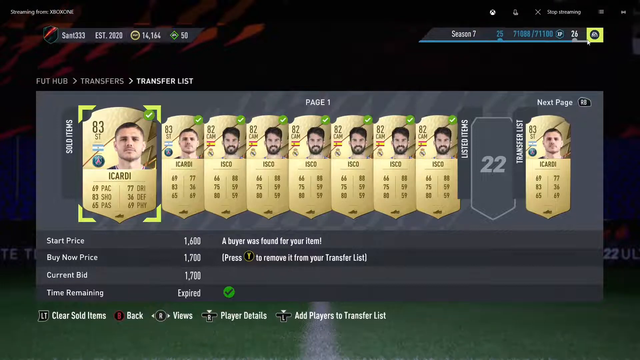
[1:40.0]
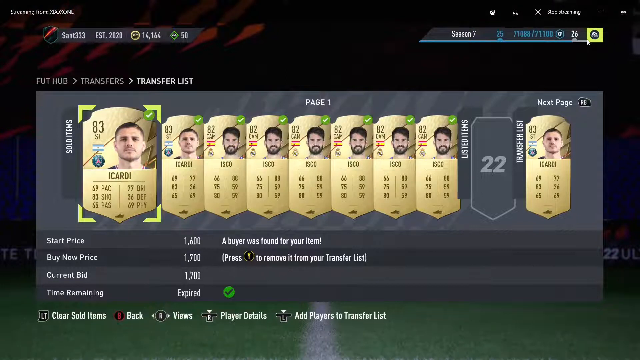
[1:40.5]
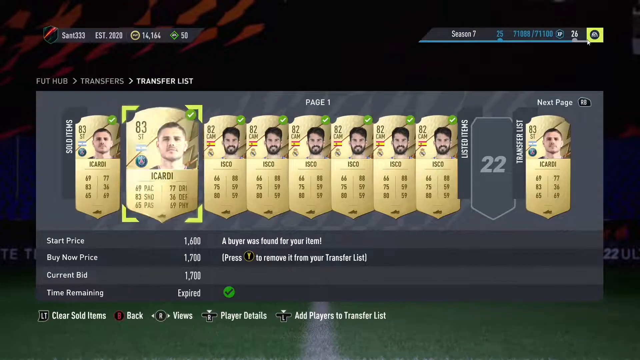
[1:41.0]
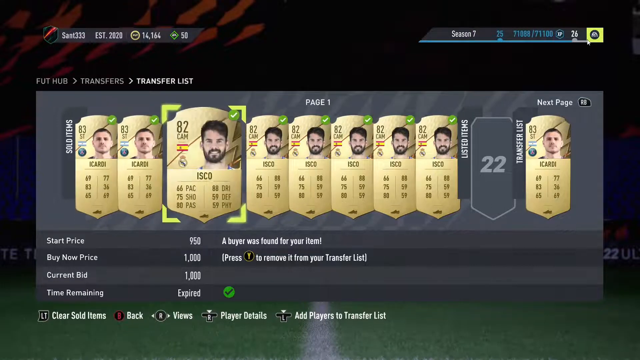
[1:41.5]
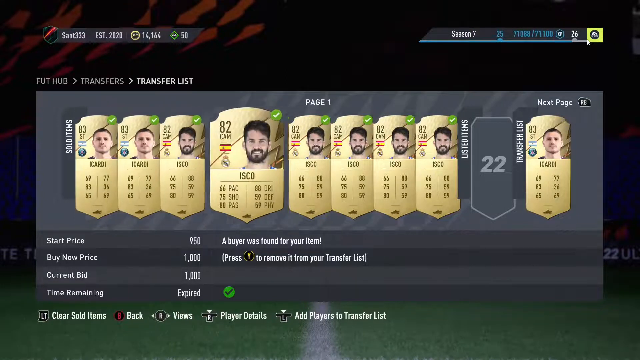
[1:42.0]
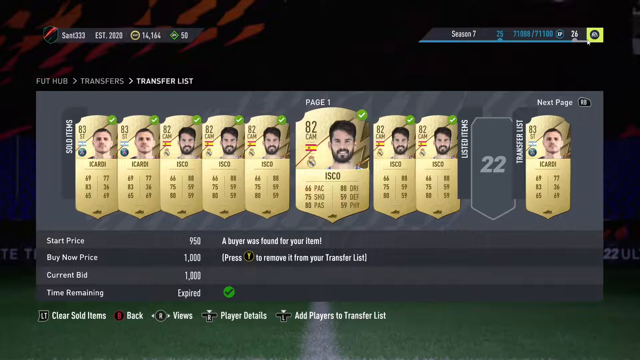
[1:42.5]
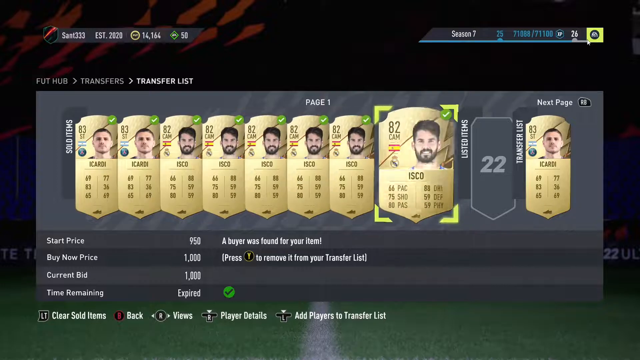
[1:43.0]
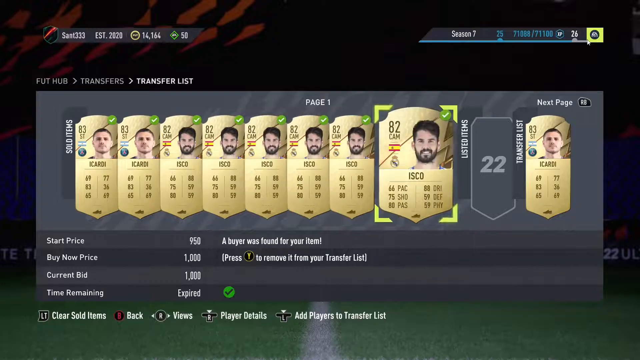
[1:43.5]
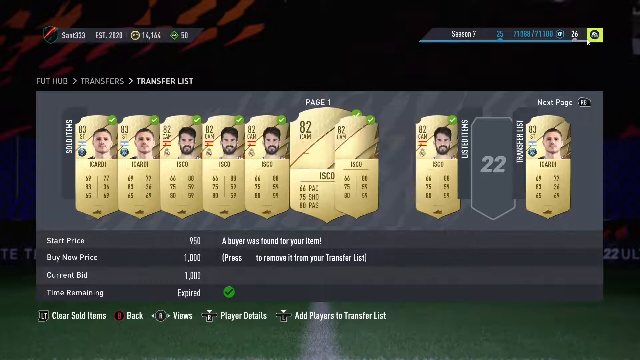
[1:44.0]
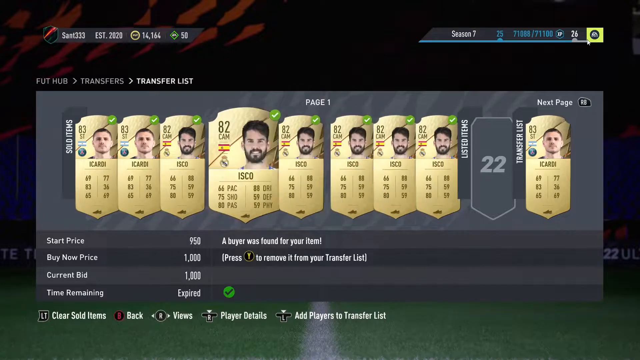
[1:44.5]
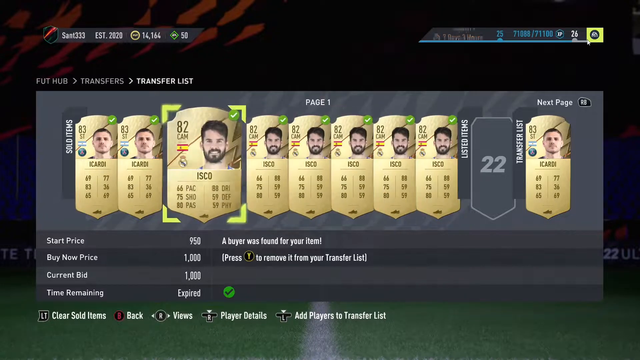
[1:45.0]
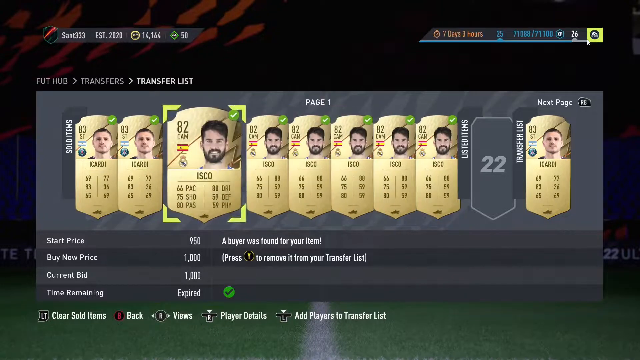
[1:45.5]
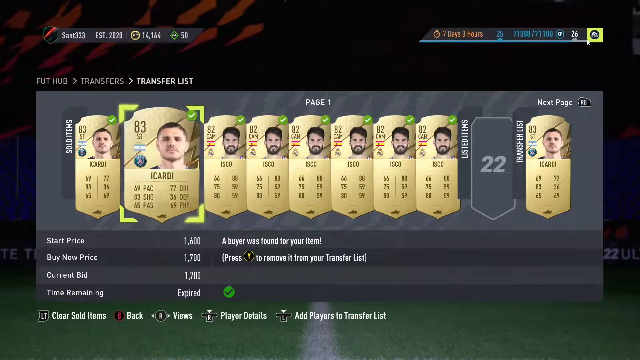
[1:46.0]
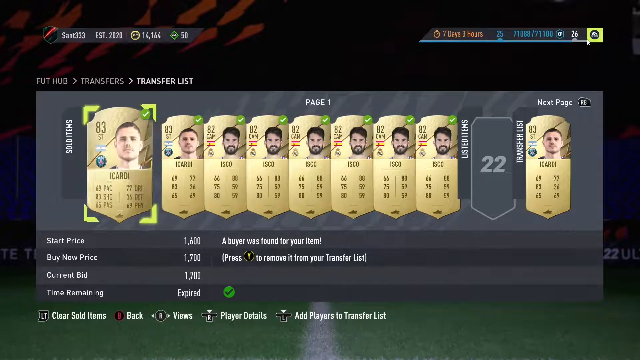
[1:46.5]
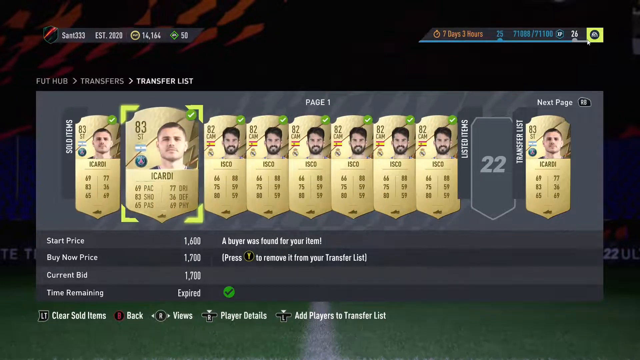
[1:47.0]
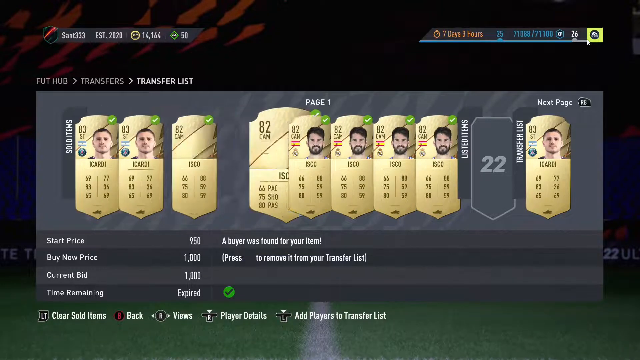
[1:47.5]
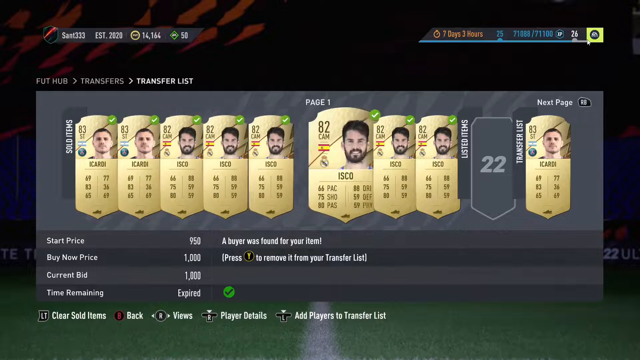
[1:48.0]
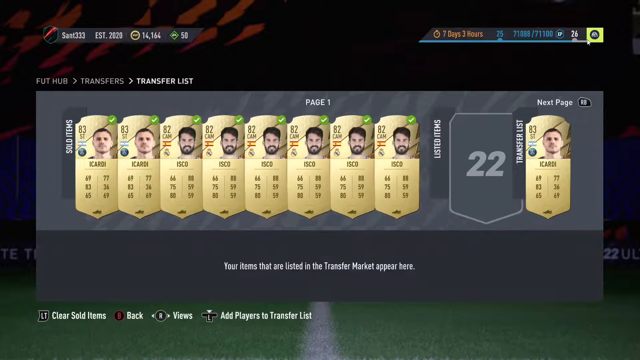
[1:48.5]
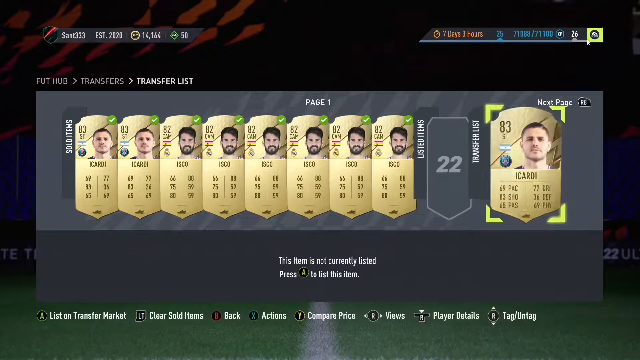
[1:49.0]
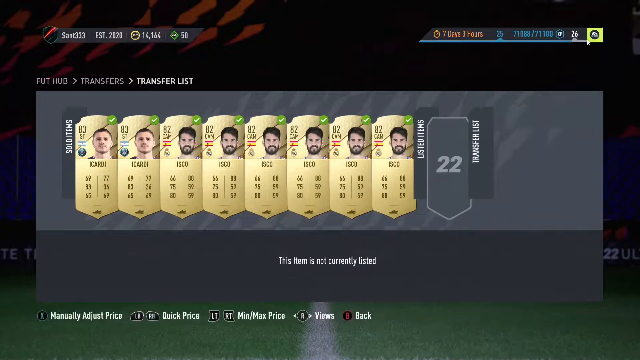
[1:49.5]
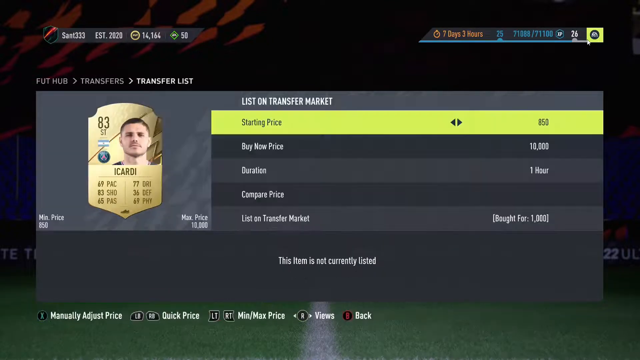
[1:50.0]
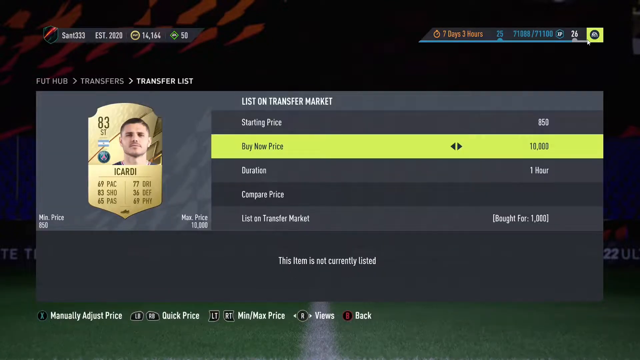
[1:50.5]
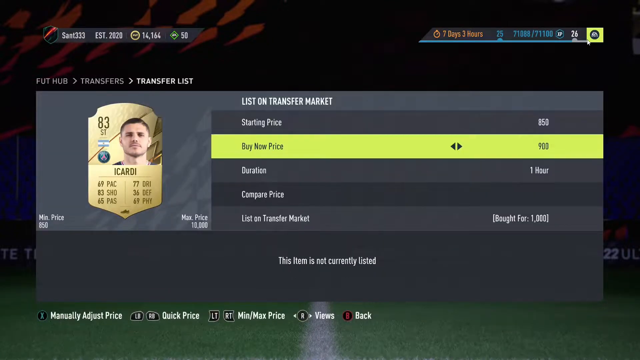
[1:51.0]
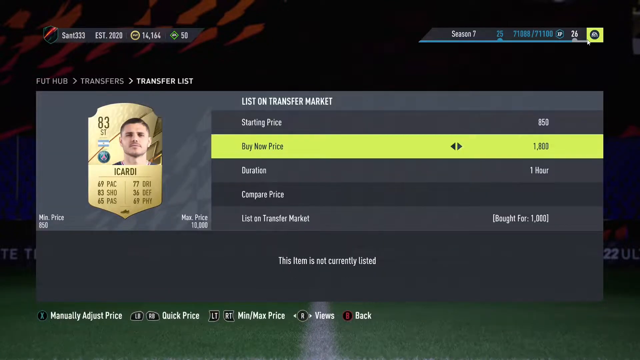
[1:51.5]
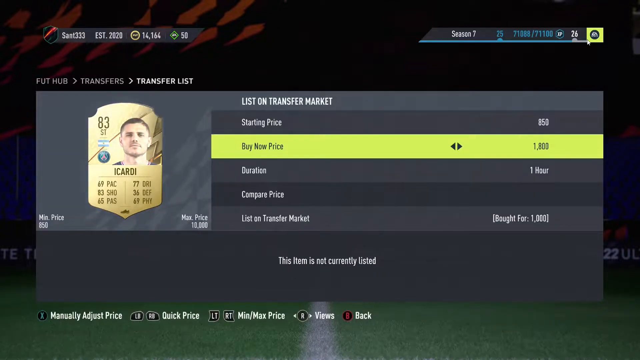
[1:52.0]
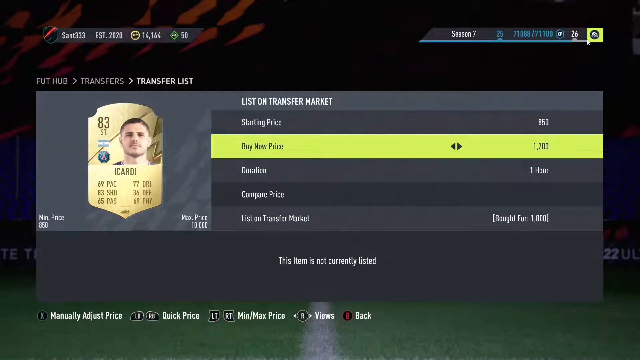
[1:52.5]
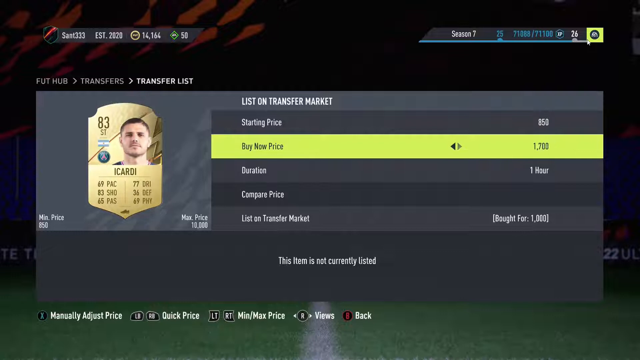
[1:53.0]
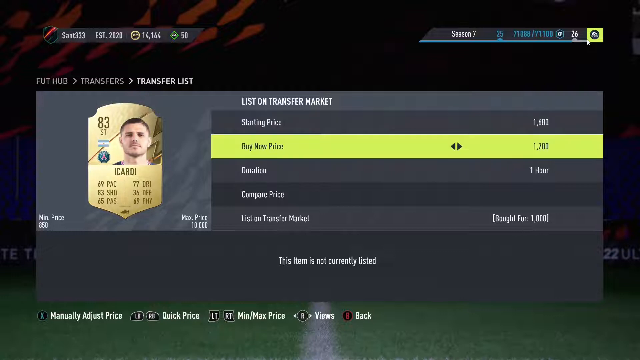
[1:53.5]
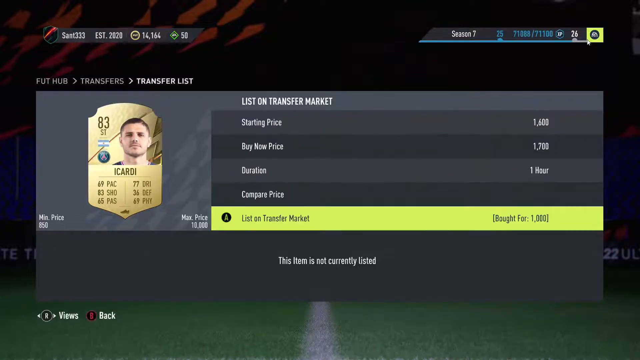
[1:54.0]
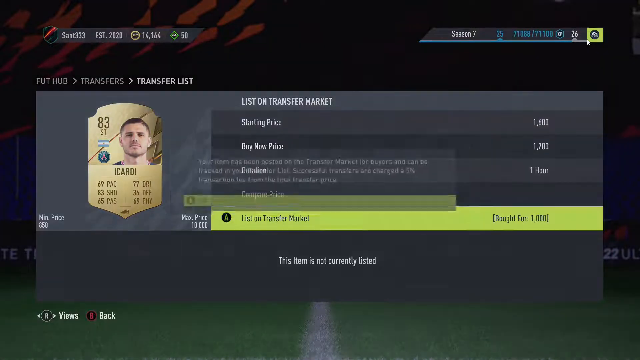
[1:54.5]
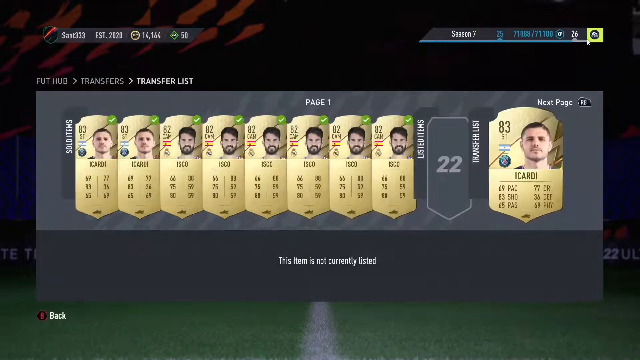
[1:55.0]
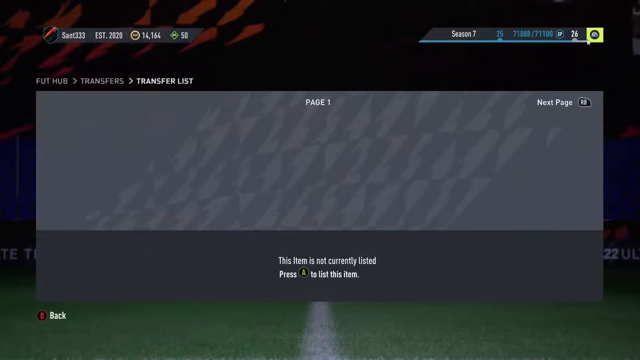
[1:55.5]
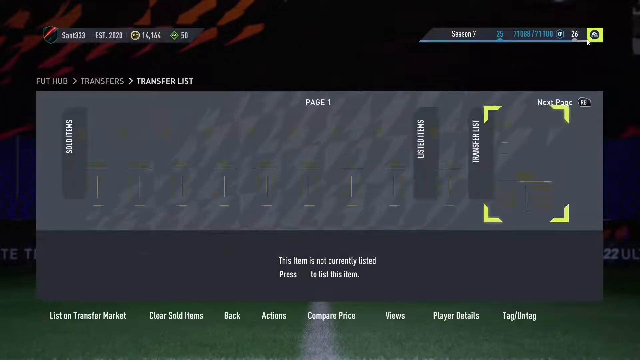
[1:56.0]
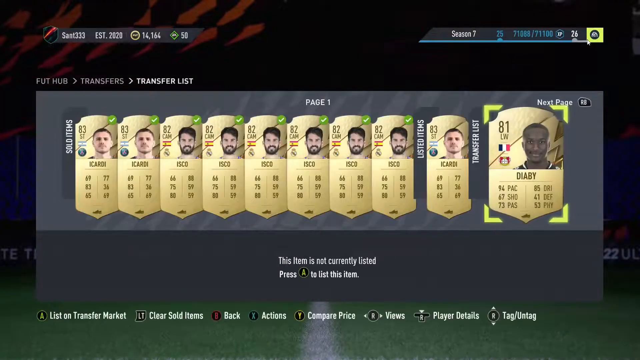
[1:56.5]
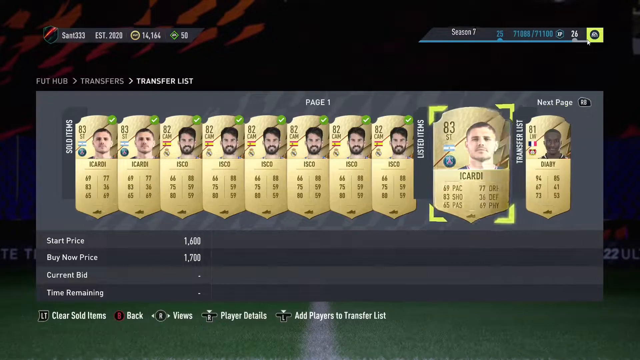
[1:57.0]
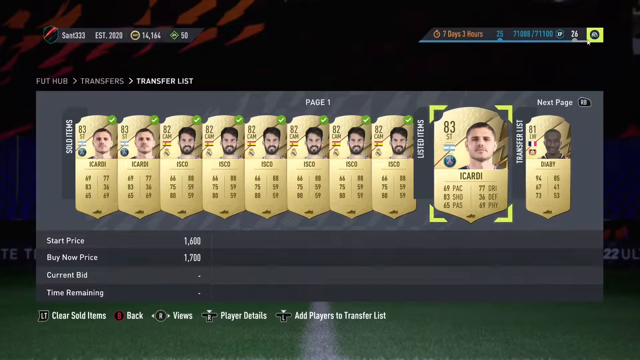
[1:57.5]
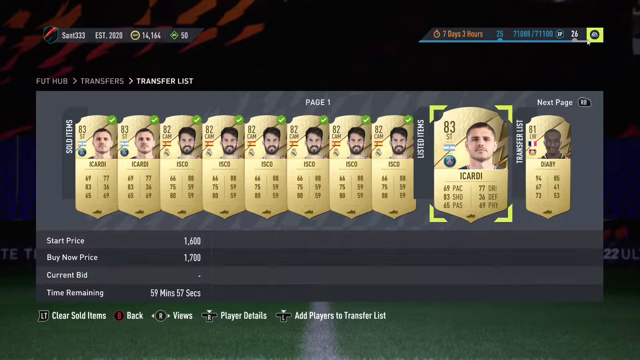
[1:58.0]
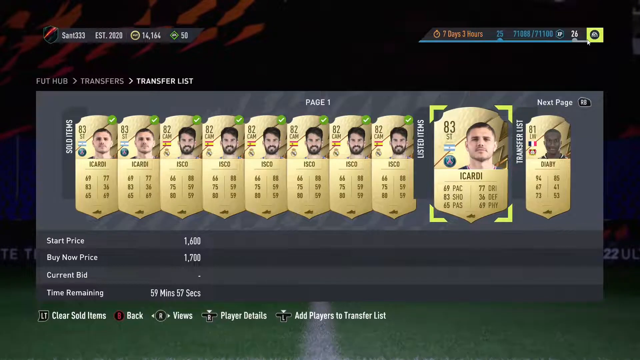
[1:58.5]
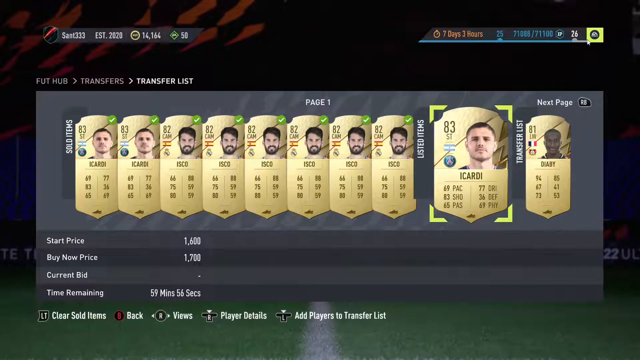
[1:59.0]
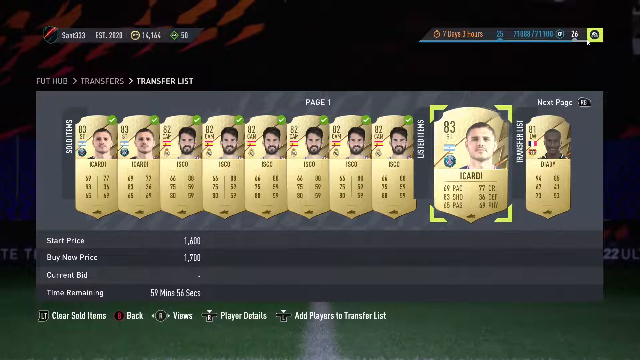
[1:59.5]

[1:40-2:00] The view is back at the menu. Sold items holds two Icardi cards and three Isco cards, listed items holds three Isco cards, and the transfer list holds one Icardi card. At the bottom, a message reads "a buyer was found for your item", with an option to press Y to remove it from the transfer list. At the top right, a menu shows "Season 7". Next to the season number is a level that appears to be 26, and an experience points counter reads 71,088 out of 71,100 XP.